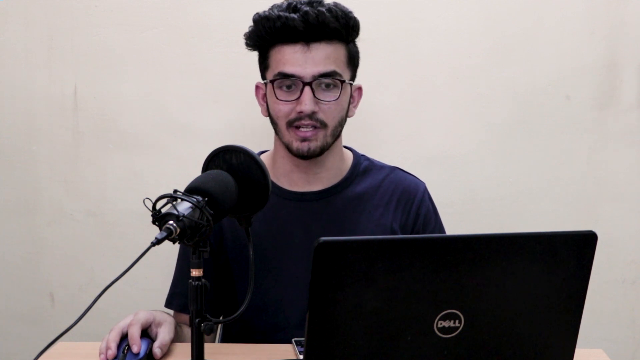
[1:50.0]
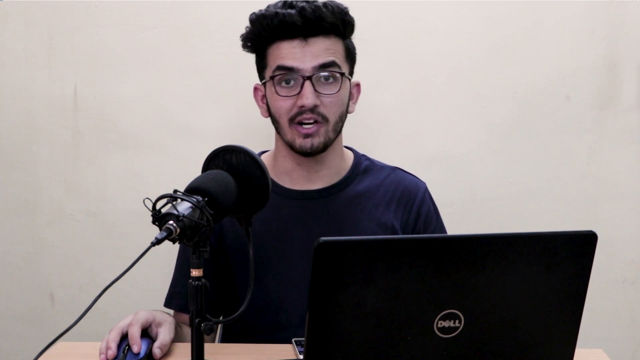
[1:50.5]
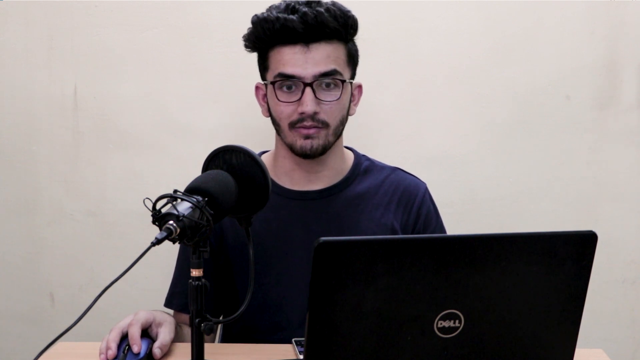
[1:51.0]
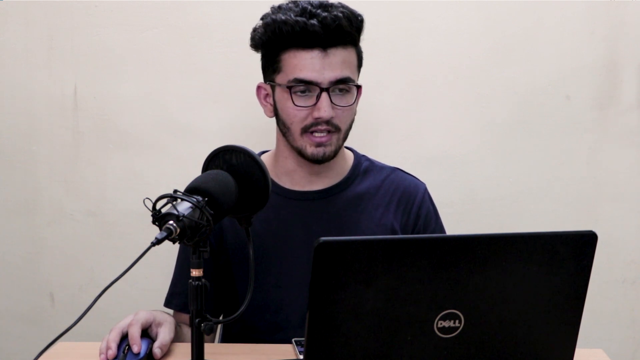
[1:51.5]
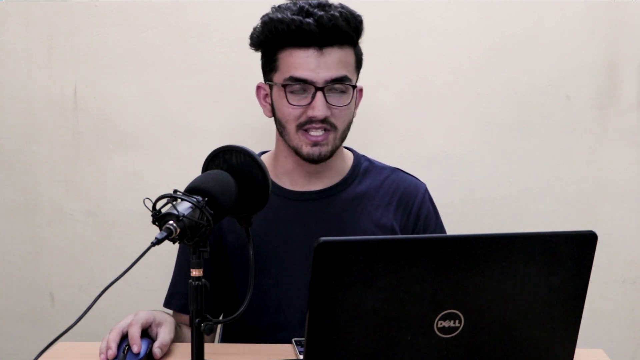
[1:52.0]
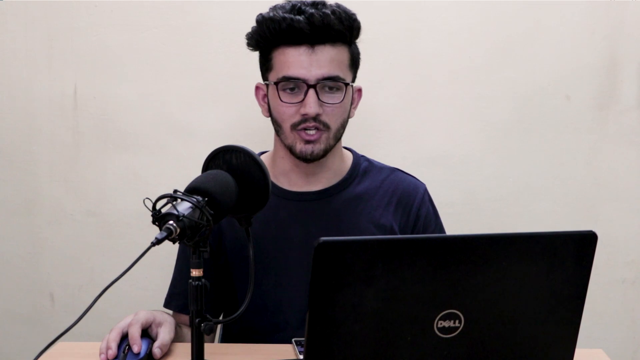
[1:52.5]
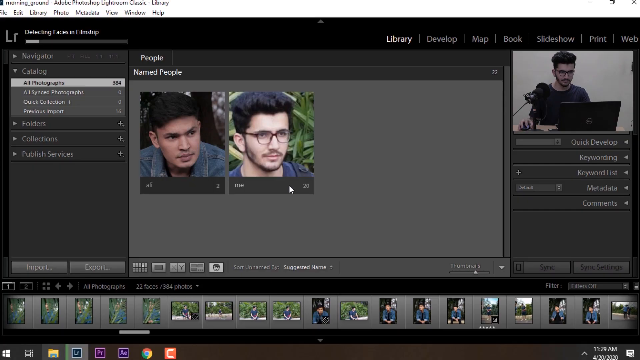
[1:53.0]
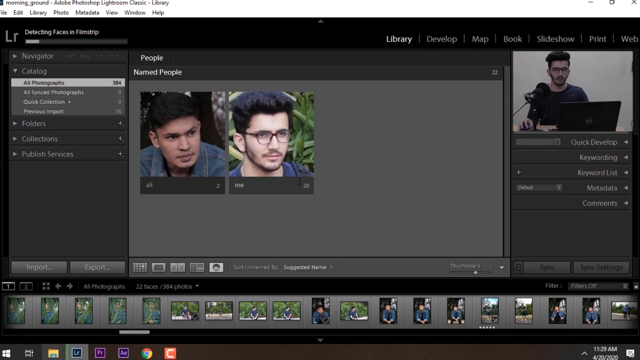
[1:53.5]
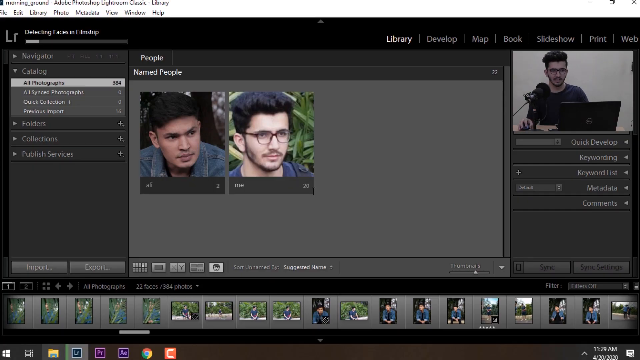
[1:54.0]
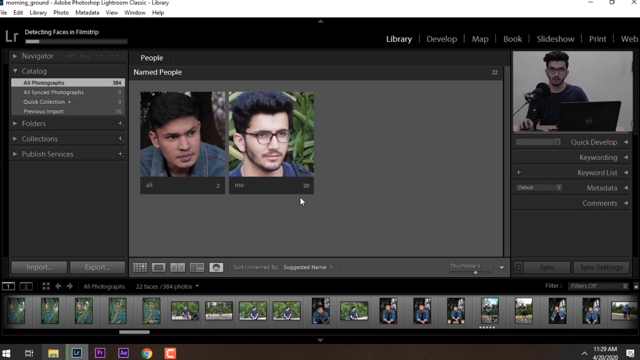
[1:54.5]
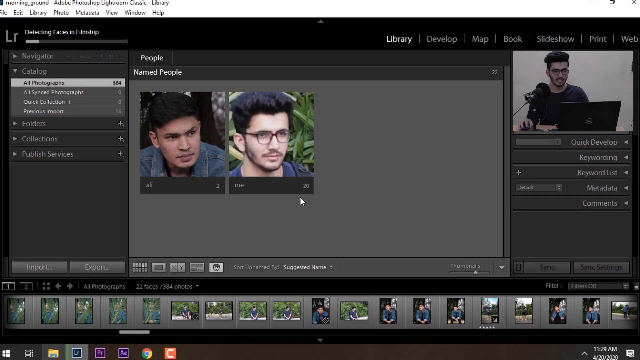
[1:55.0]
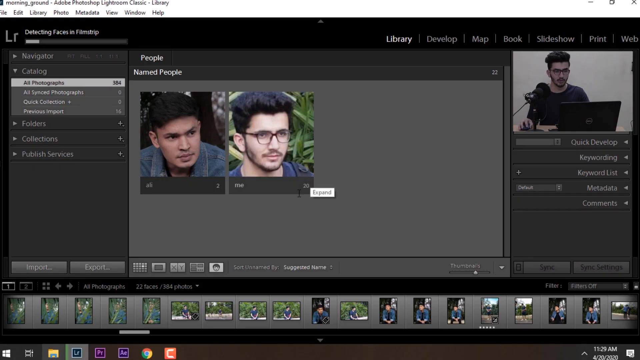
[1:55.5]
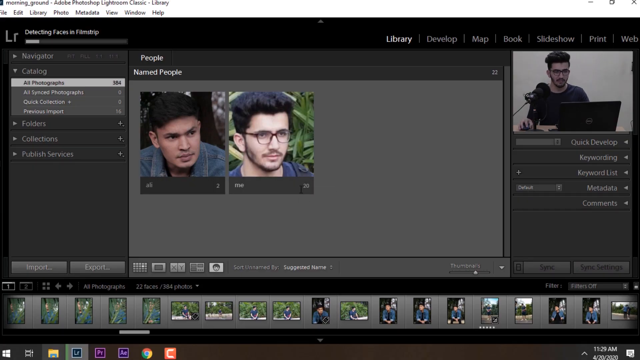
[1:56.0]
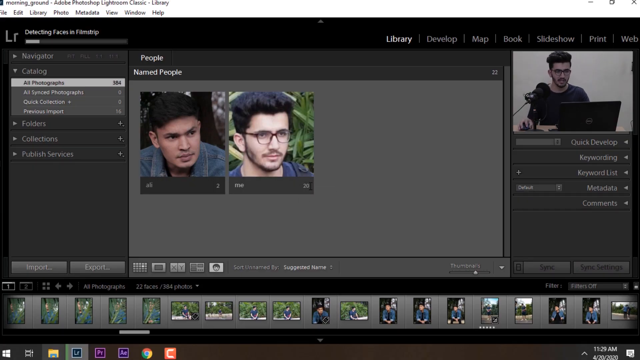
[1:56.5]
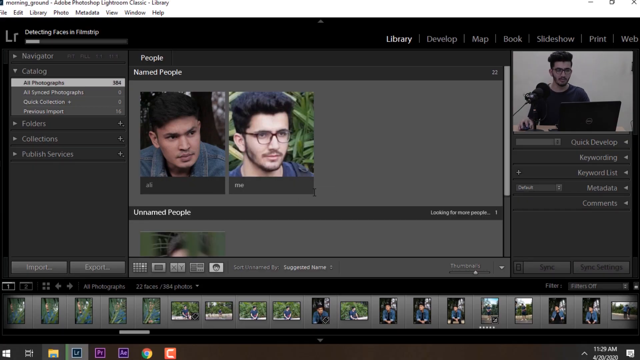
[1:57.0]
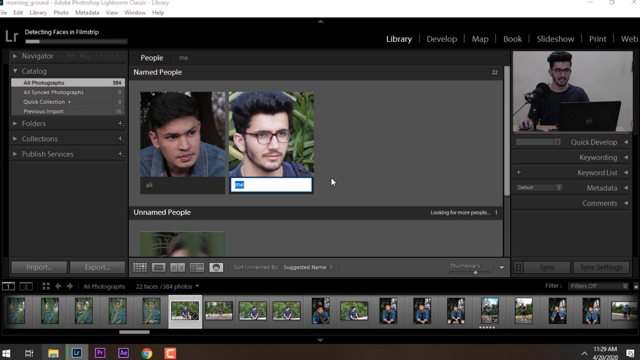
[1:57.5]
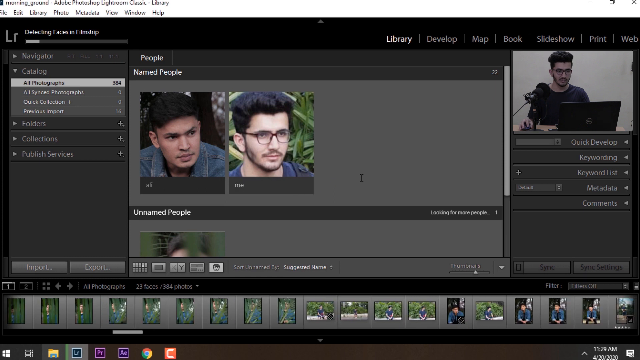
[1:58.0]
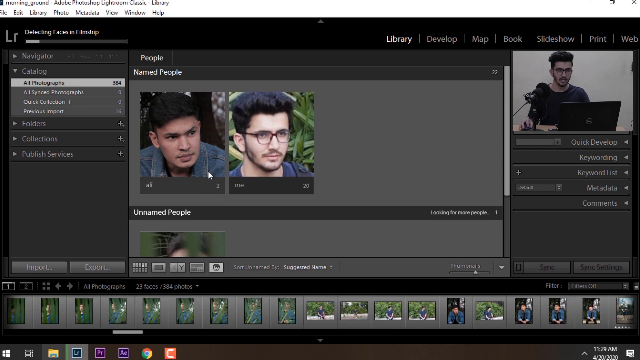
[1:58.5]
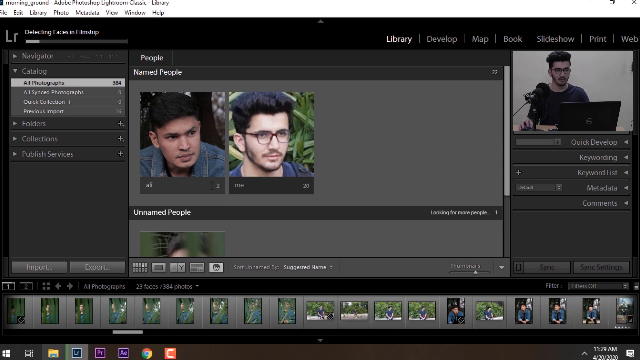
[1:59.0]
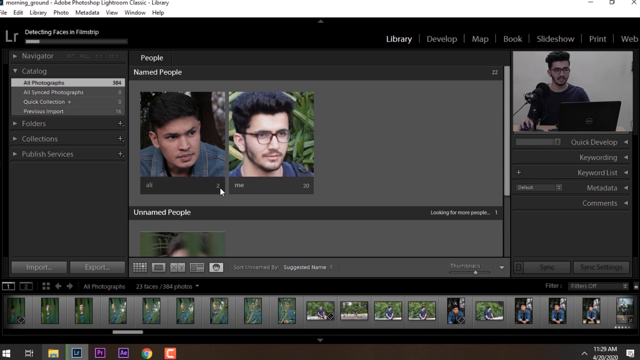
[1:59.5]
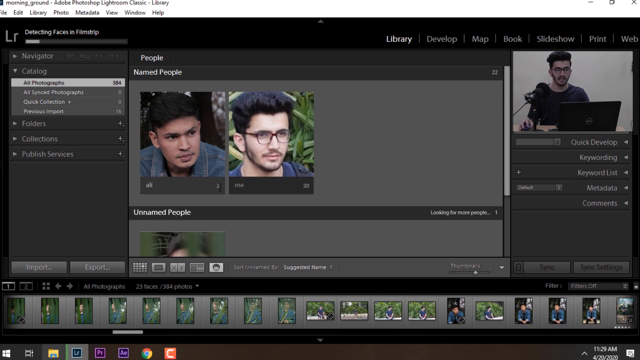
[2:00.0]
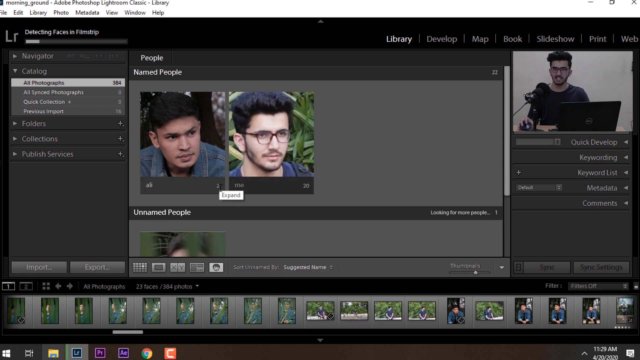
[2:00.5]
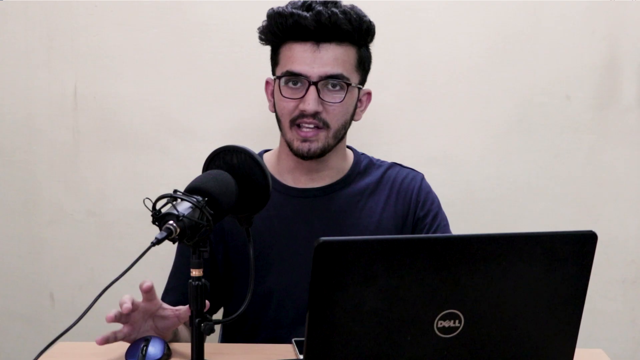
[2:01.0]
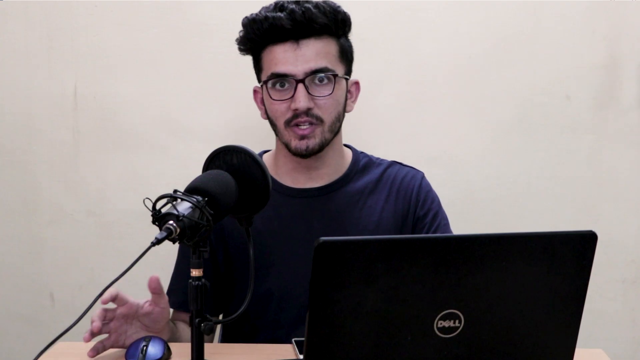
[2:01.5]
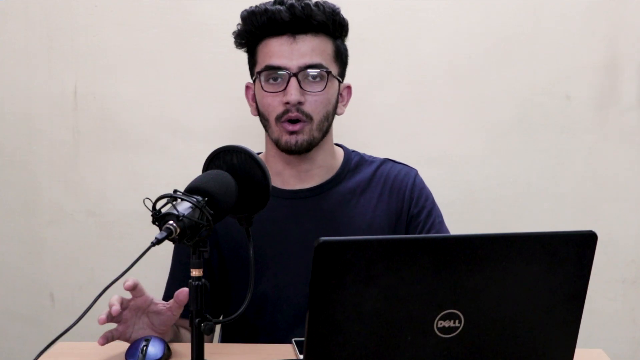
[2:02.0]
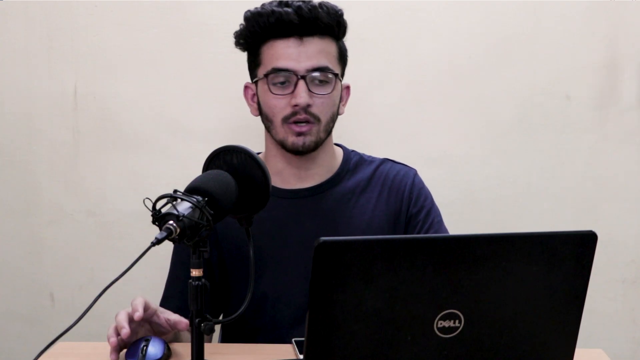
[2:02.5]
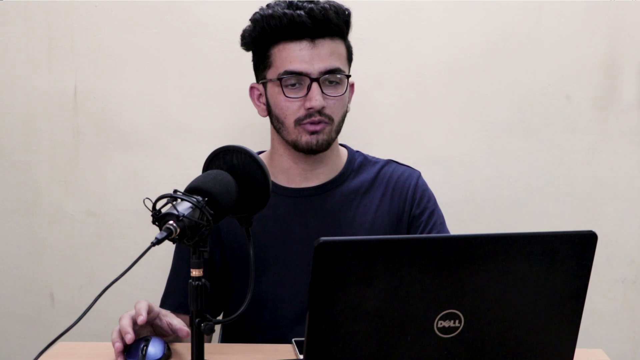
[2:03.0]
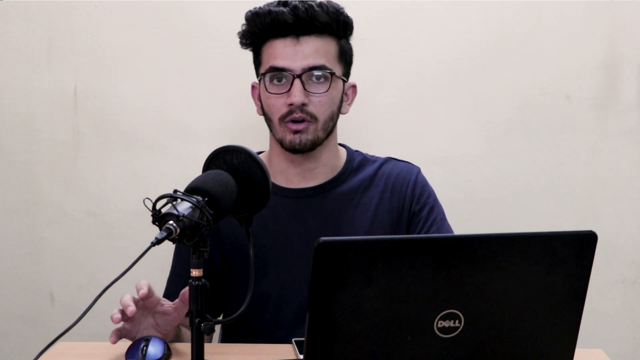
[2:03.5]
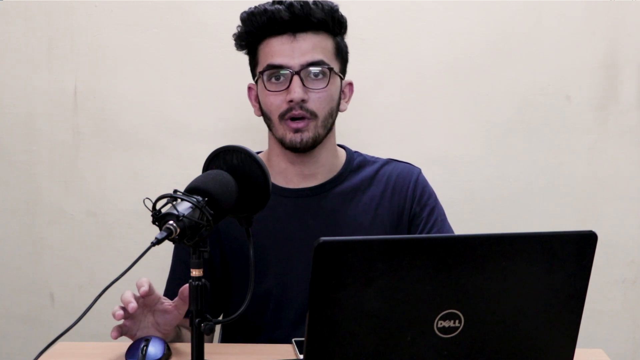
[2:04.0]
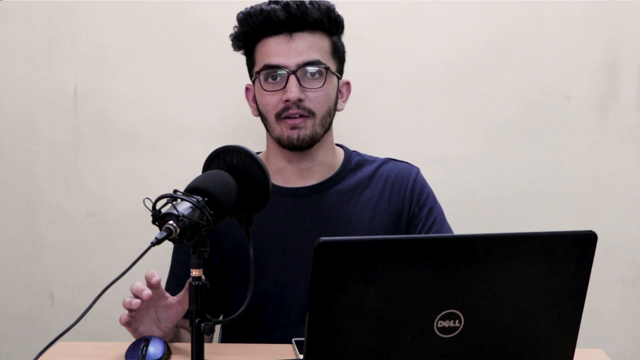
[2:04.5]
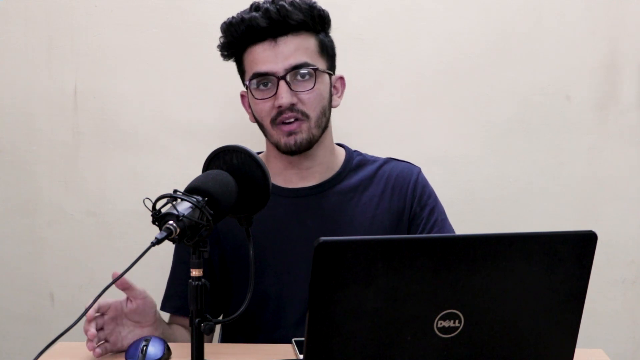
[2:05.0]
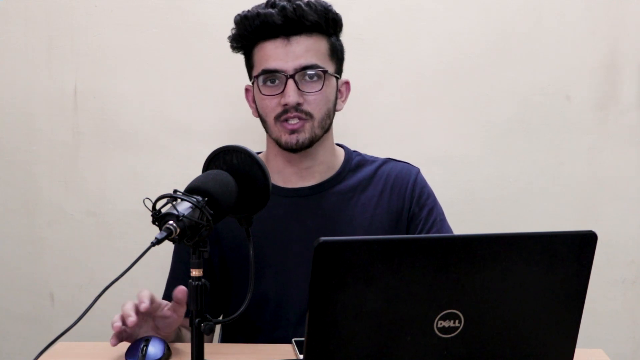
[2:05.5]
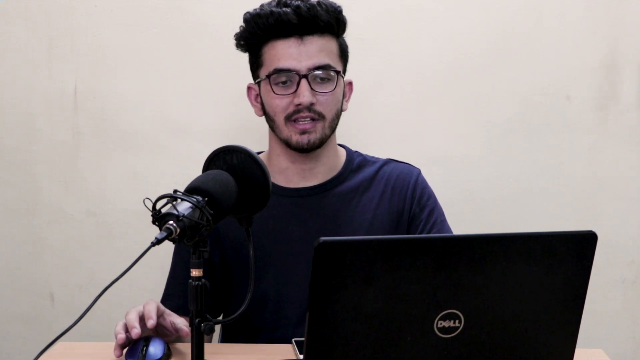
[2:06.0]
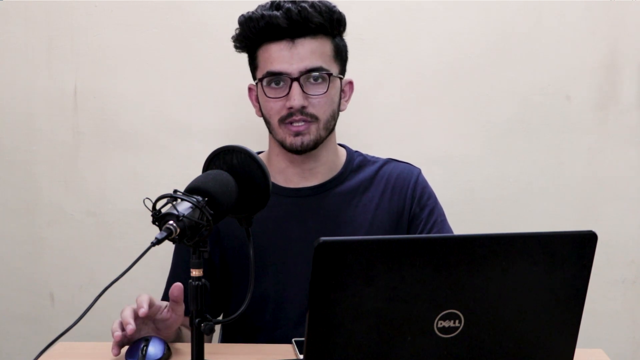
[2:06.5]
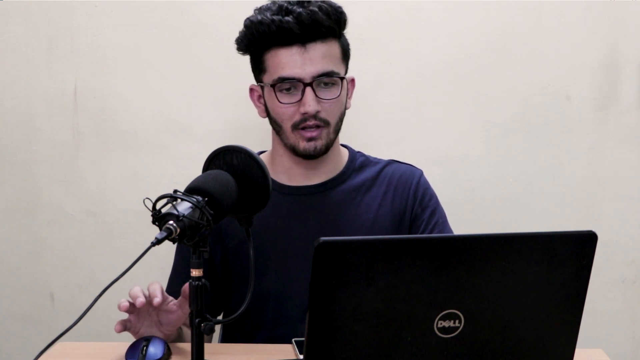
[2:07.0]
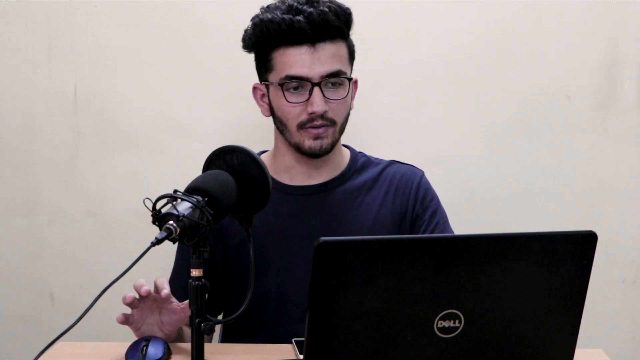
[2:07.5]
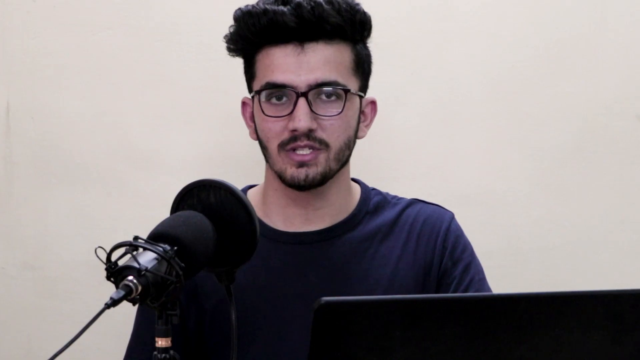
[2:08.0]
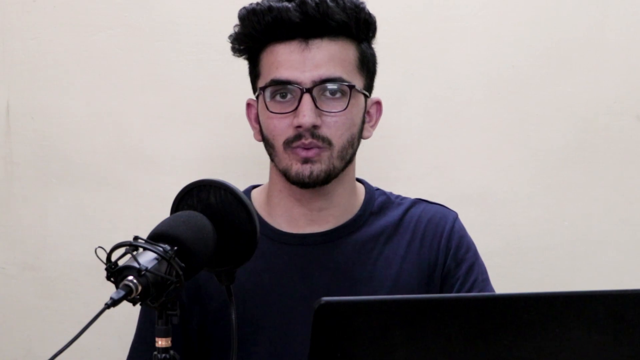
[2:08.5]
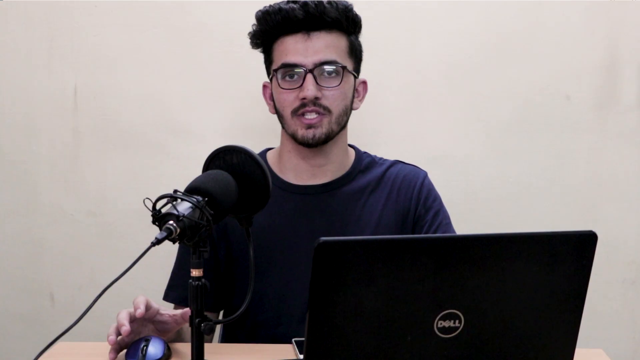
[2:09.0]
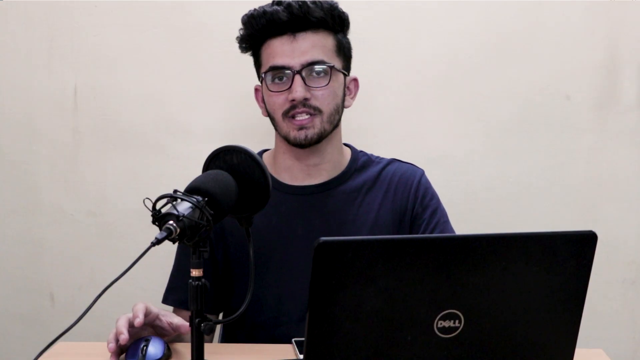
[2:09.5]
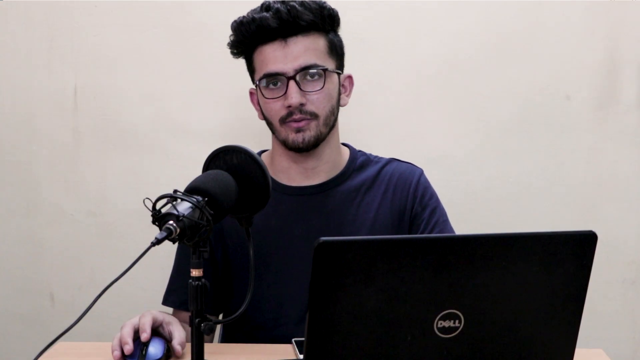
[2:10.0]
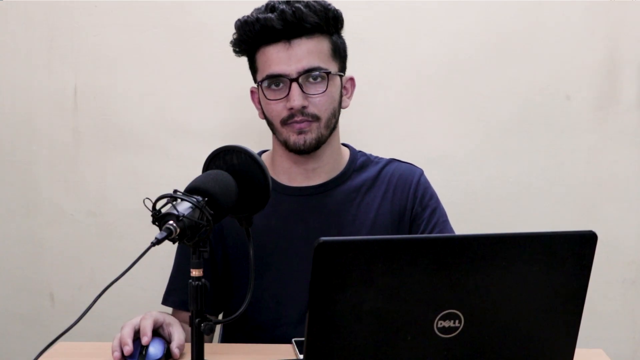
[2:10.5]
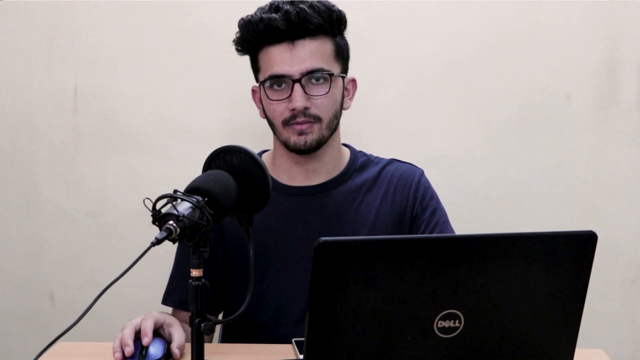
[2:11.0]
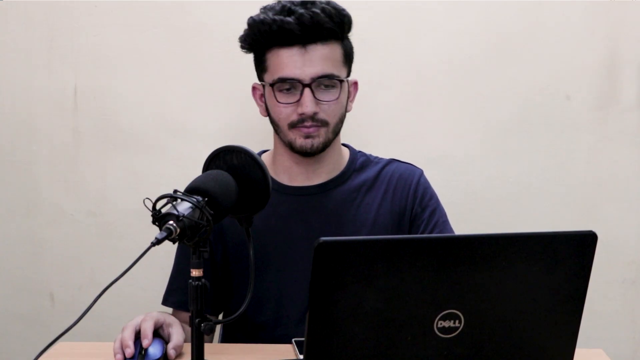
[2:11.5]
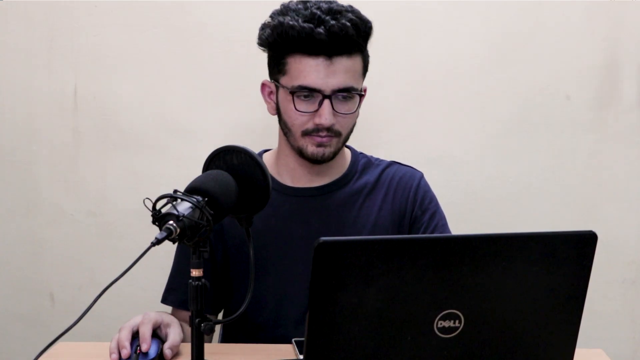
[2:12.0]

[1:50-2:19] The creator is sitting behind a professional microphone and a Dell laptop against a plain white background, speaking to the camera and looking back and forth between the laptop and the camera. The video cuts to the Adobe Lightroom screen capture of the creator's laptop. Under the catalog of faces, under named people, two people have been identified: the first apparently labeled Ali, and the second labeled "me". The video of the creator is in the upper right corner, so both the screen capture and the footage of the creator are shown. The user clicks on the icon labeled "me" and then goes over to the icon labeled Ali. The video then cuts to the creator sitting behind the Dell laptop and professional microphone against a white background, speaking to the camera. The shot zooms in to his face while he continues speaking, and then it cuts to a black screen before the video ends.